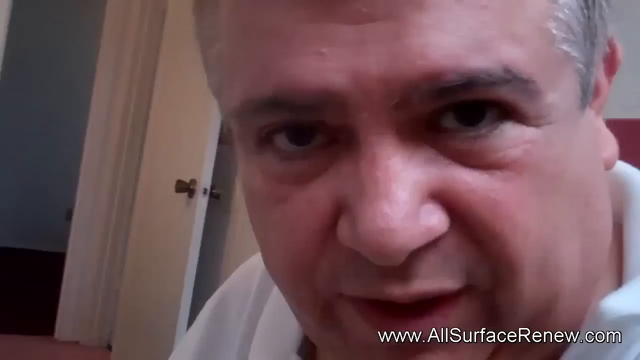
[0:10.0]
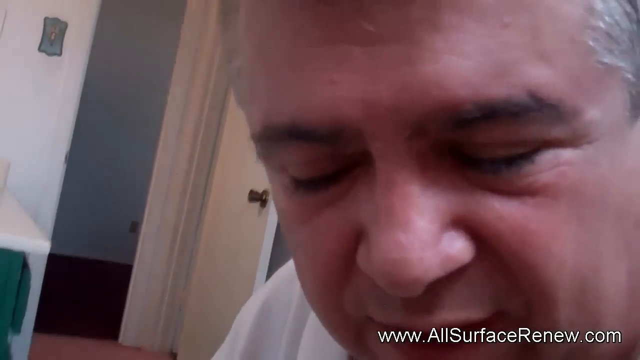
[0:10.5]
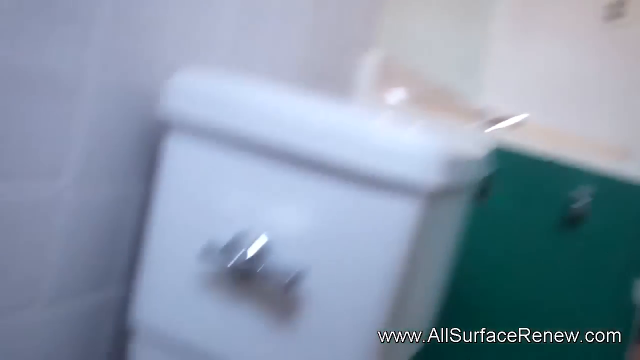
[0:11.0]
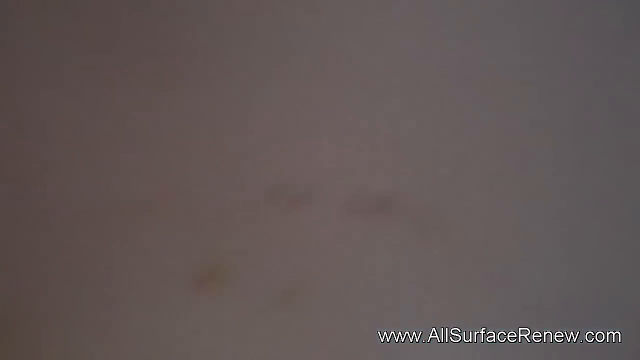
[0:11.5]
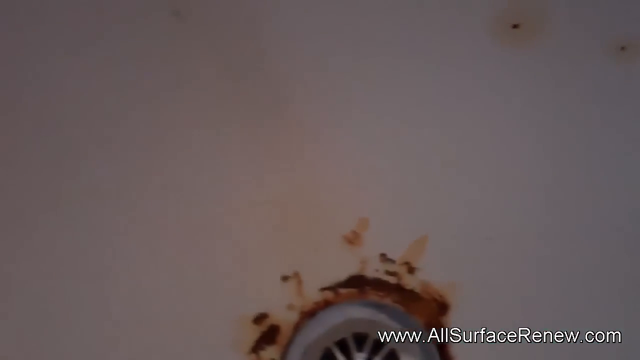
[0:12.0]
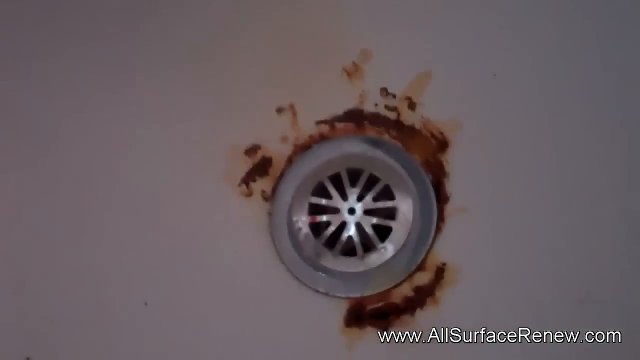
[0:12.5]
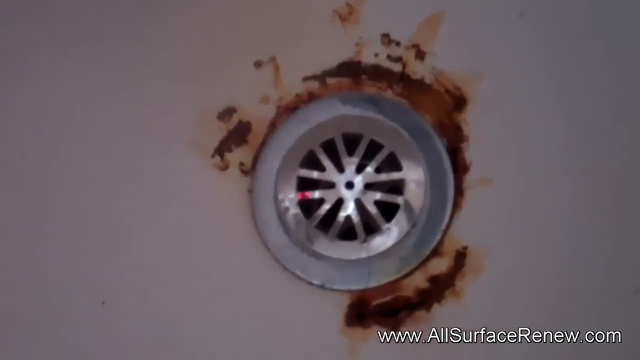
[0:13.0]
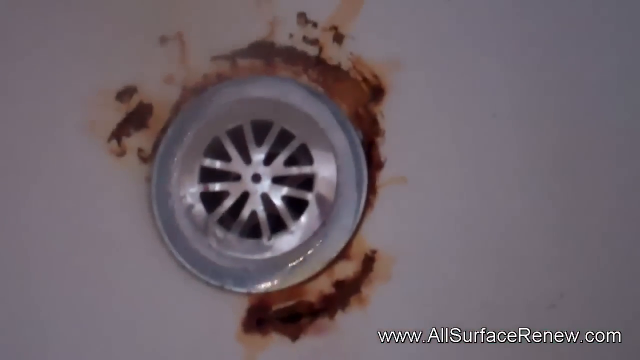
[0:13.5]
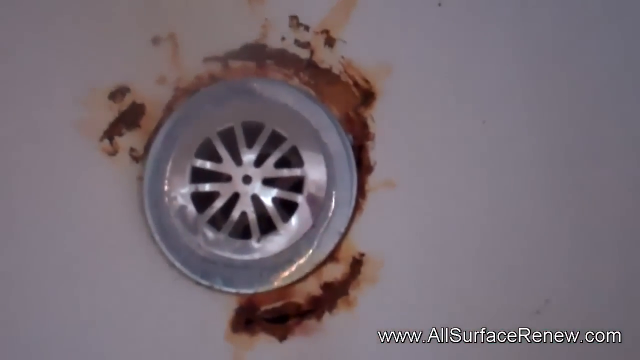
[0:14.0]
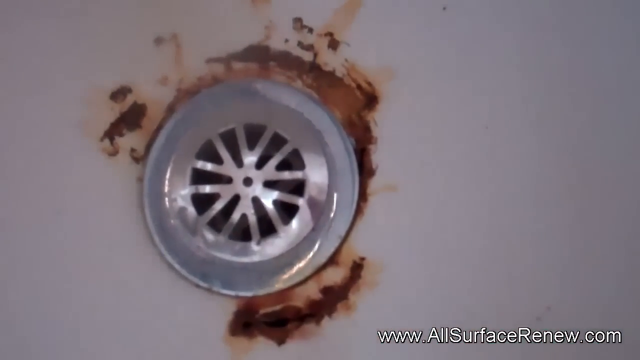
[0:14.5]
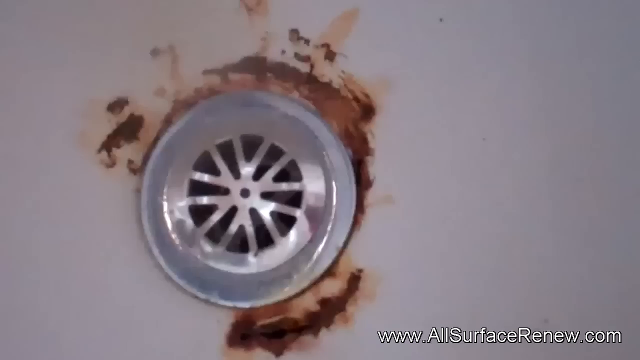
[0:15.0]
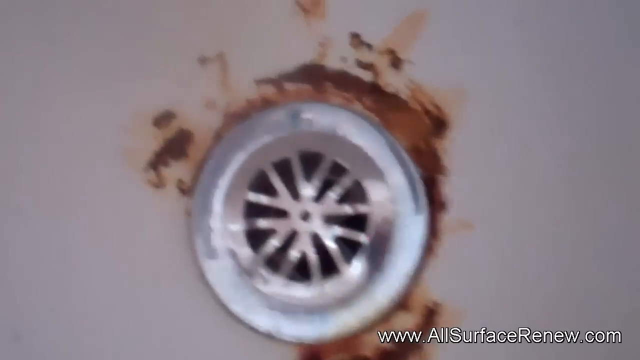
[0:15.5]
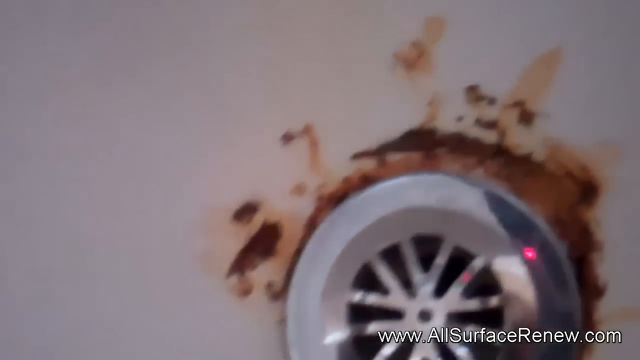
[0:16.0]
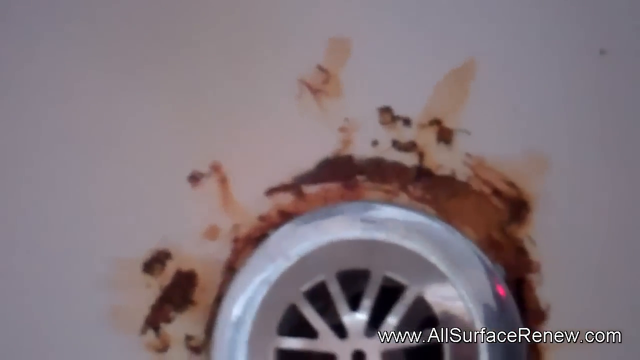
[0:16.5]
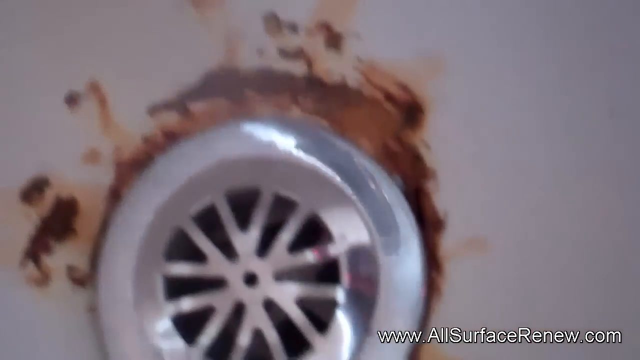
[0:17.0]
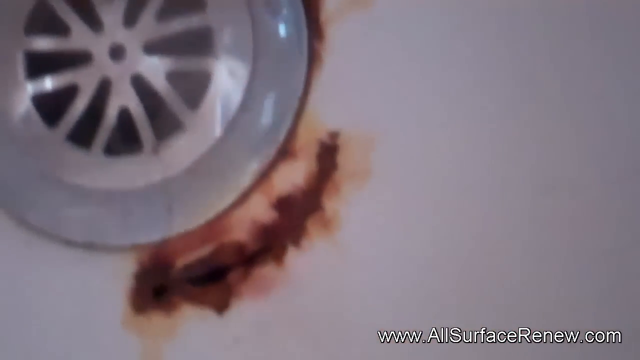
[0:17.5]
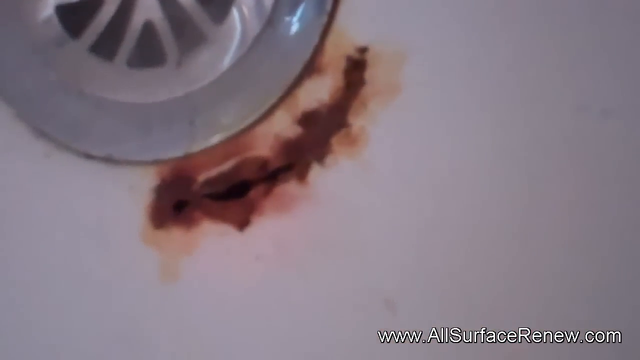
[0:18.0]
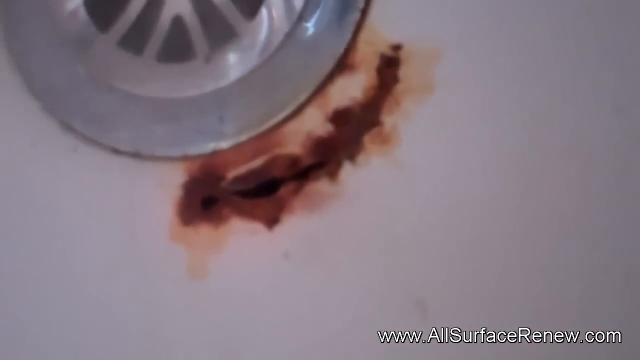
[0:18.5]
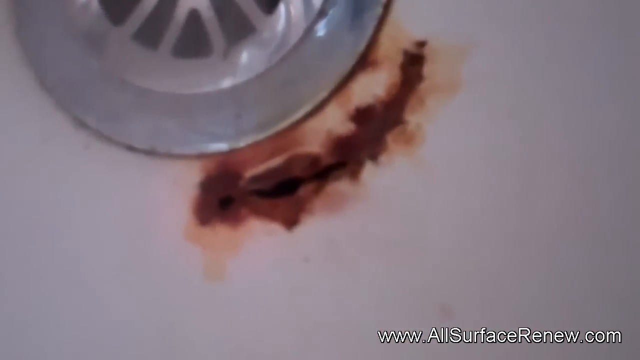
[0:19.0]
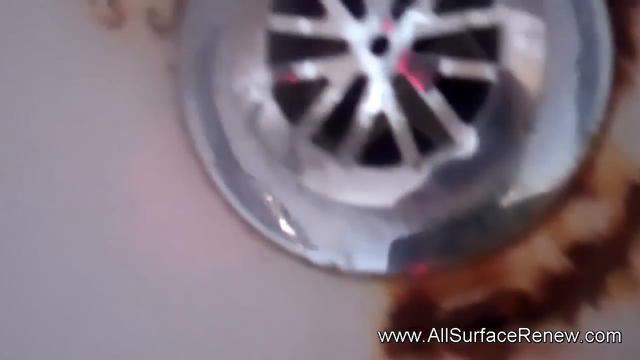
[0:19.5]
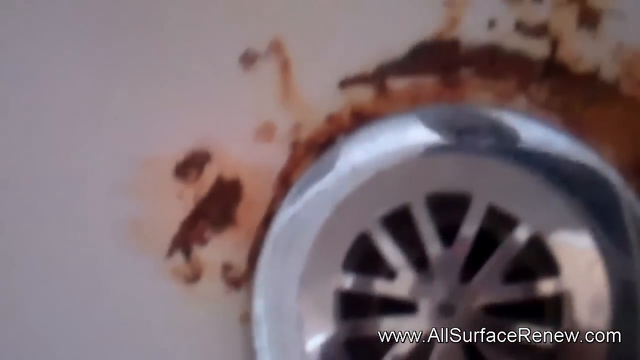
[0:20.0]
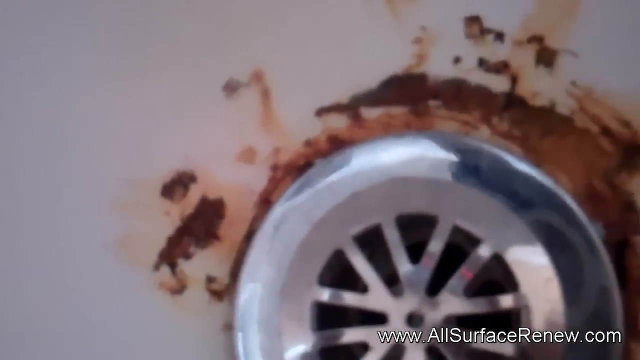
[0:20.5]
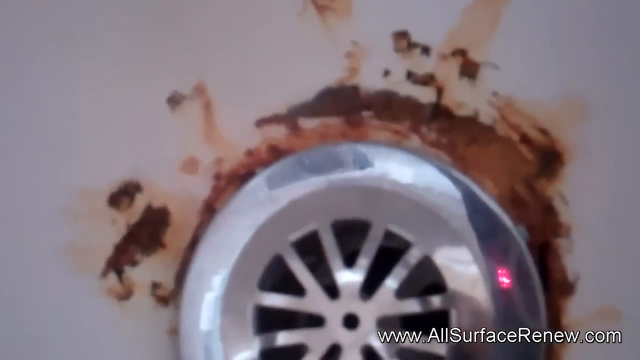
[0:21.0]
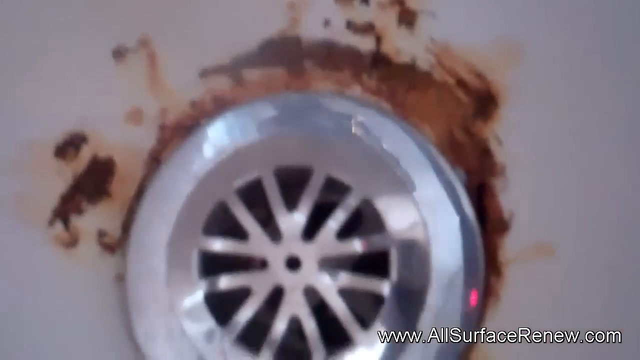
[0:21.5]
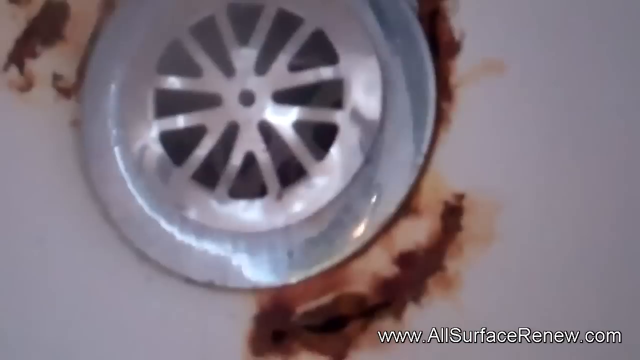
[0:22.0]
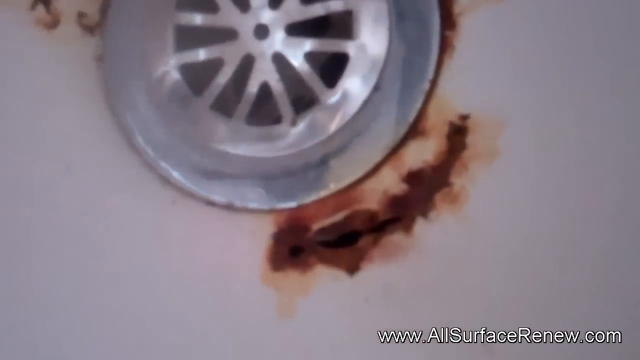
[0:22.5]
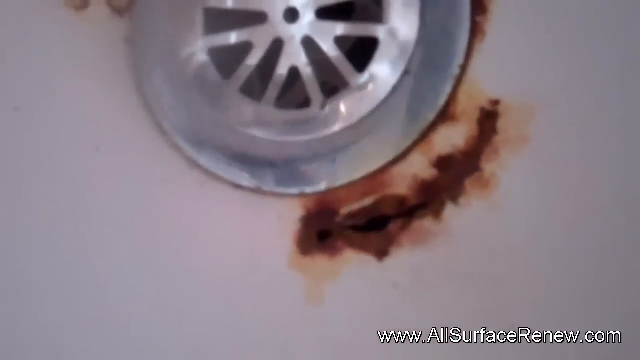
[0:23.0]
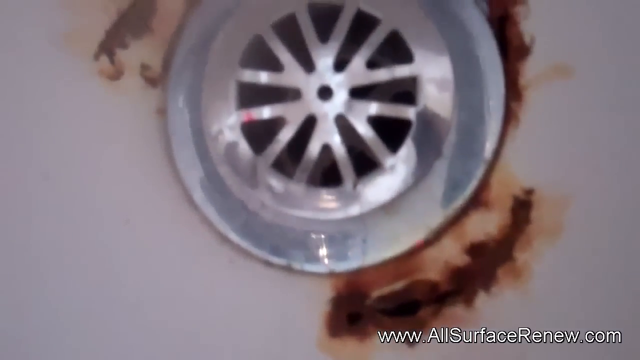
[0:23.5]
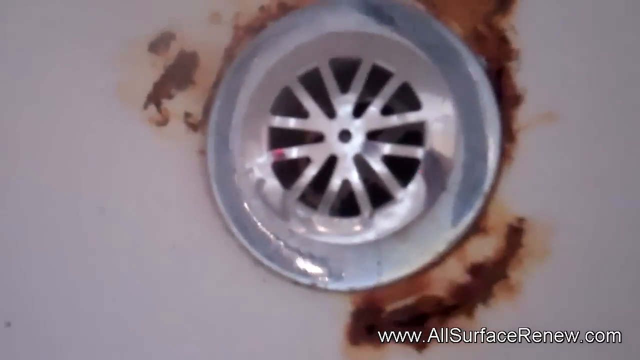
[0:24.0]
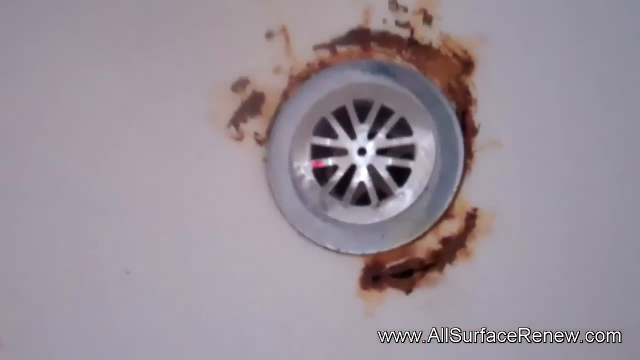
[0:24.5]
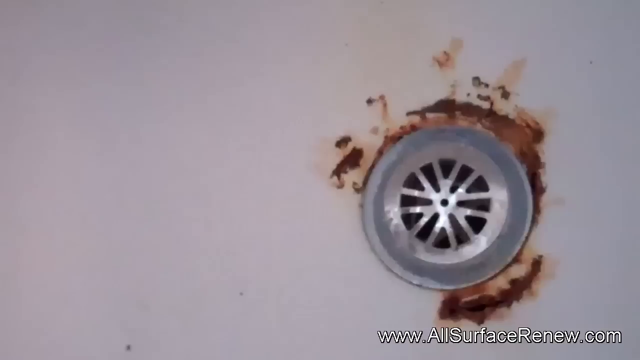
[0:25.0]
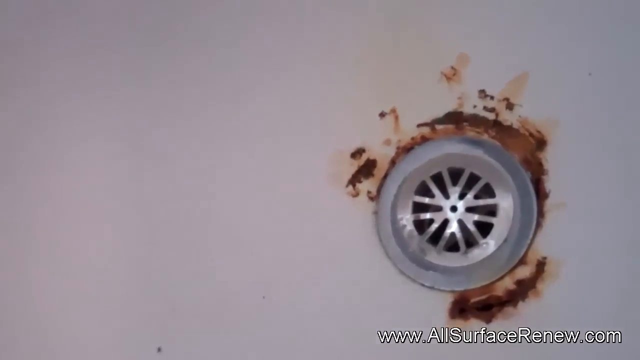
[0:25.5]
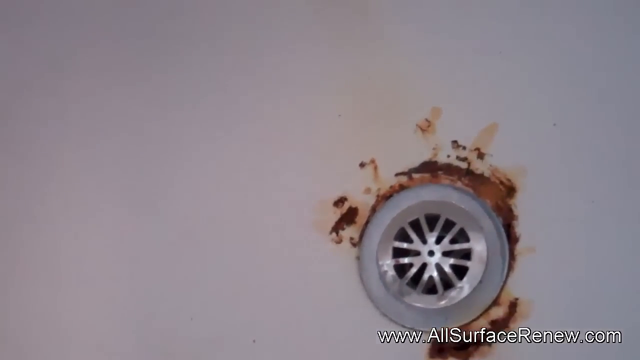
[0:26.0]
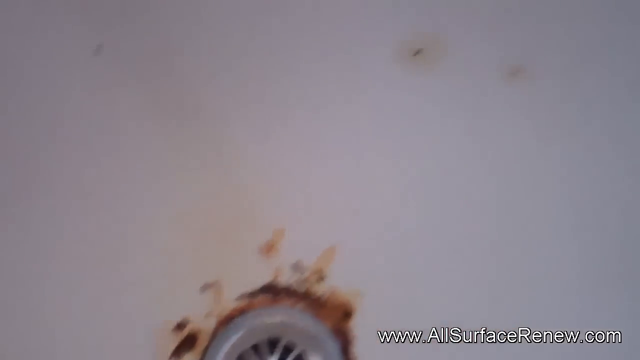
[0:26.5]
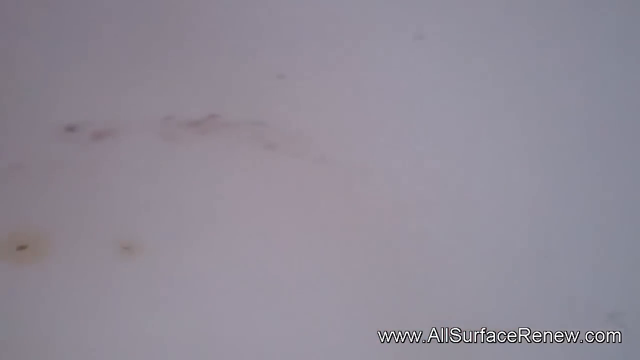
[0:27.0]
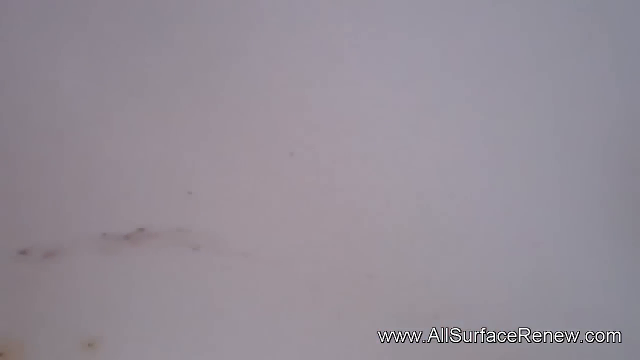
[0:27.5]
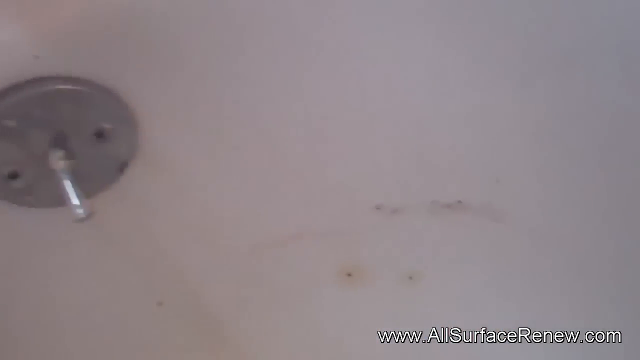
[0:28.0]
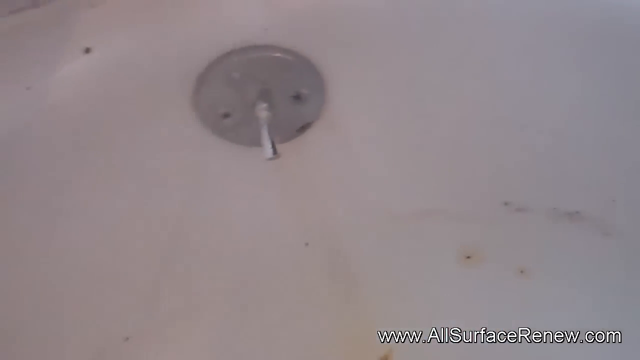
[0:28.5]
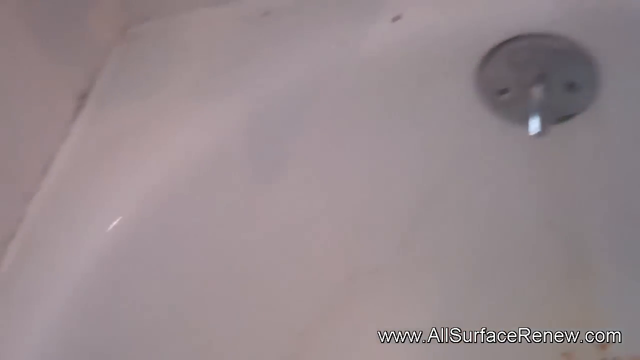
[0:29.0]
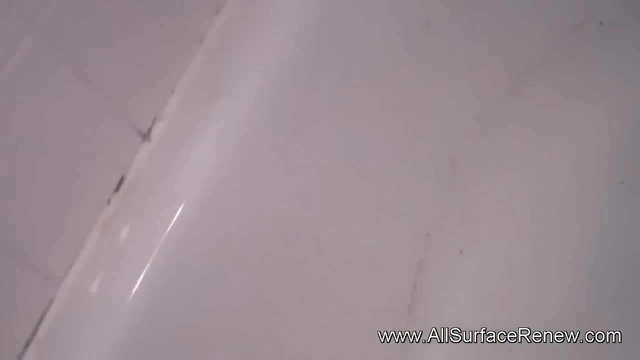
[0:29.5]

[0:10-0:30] The man holds the camera selfie style, pointing it at himself. He is a somewhat overweight man with gray hair, no beard and a clean-shaven face, wearing a white sweater. He then turns the camera to his bathtub, which has a rusted drain and a rusted area around the drain, and moves the camera around the area. The video quality is not great and the image moves around because he is holding the camera himself. Text overlaid at the bottom right of the video reads "www.allsurfacerenew.com." He does nothing other than point the camera at the rusted drain, and he seems unable to see what he is filming, since he misses the drain a couple of times and circles back to it.